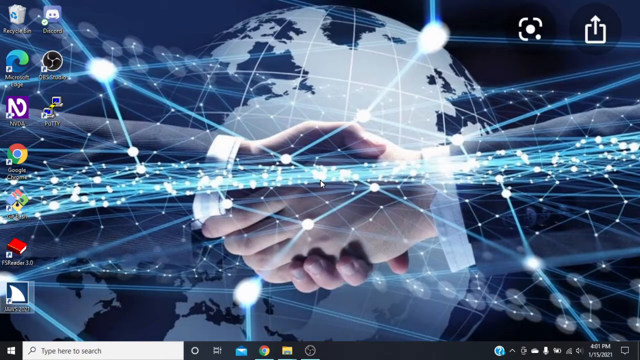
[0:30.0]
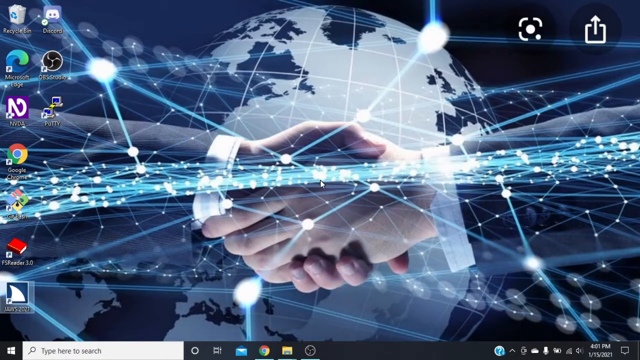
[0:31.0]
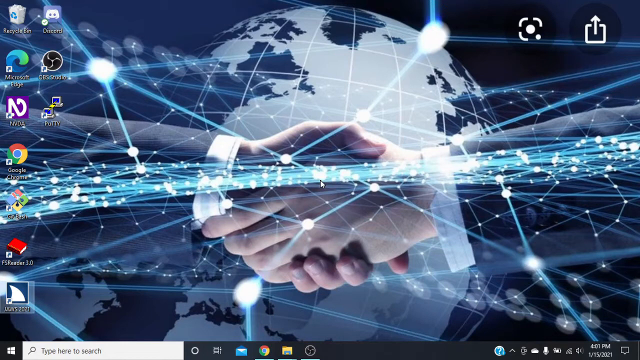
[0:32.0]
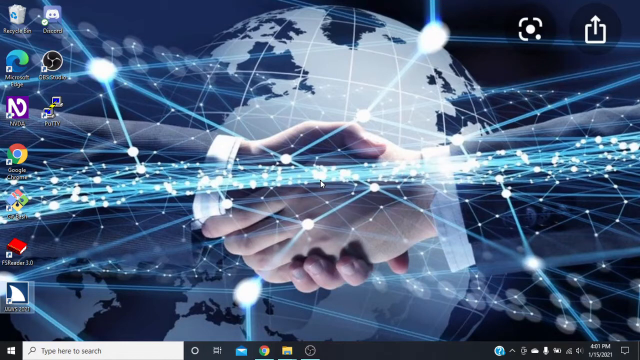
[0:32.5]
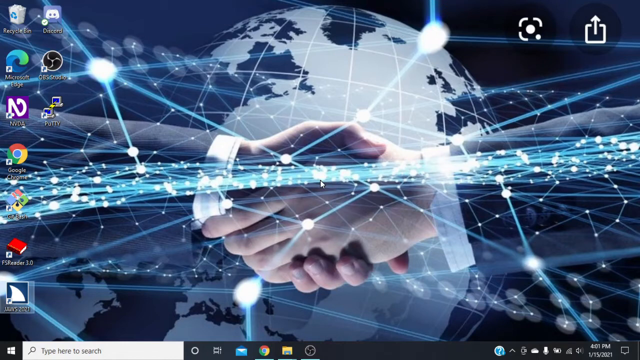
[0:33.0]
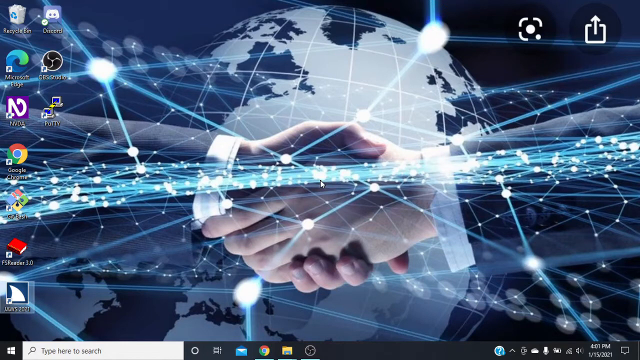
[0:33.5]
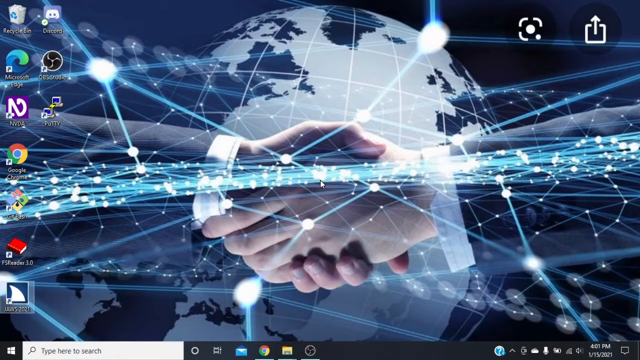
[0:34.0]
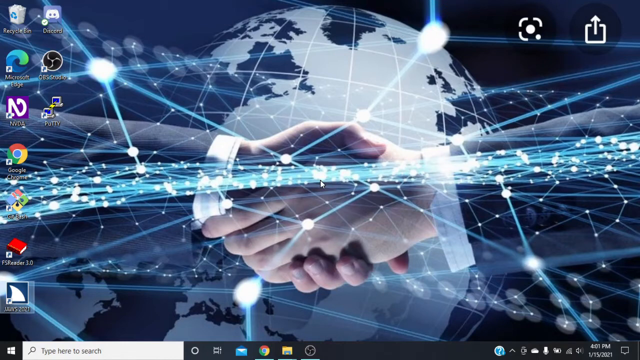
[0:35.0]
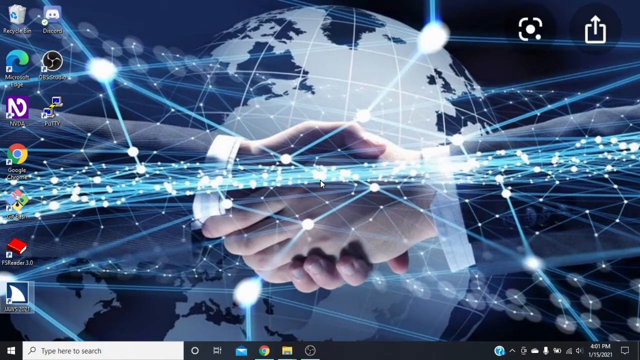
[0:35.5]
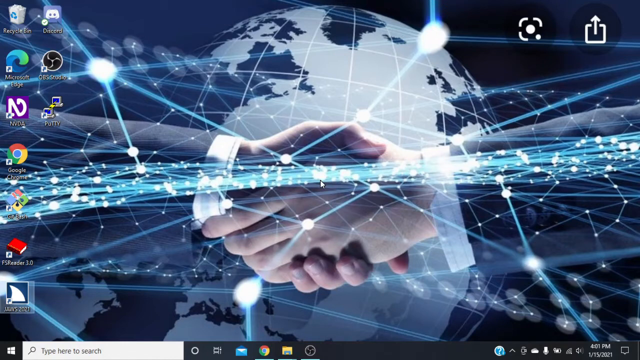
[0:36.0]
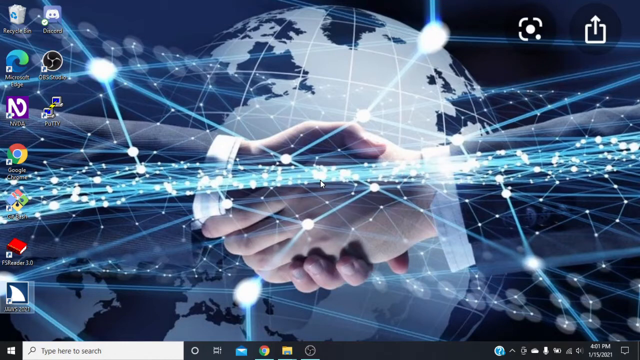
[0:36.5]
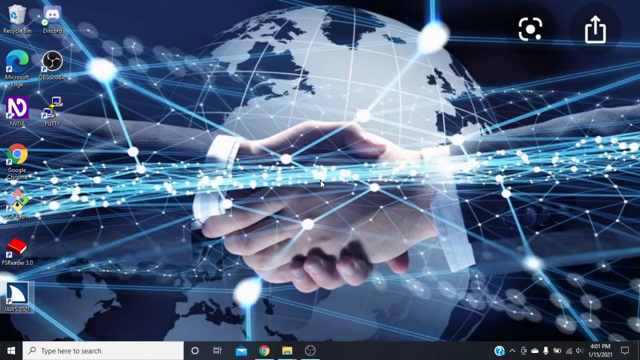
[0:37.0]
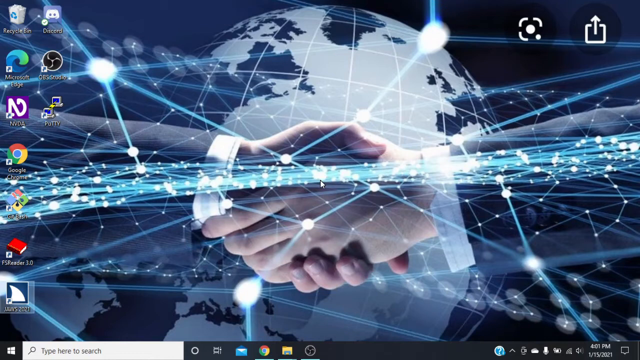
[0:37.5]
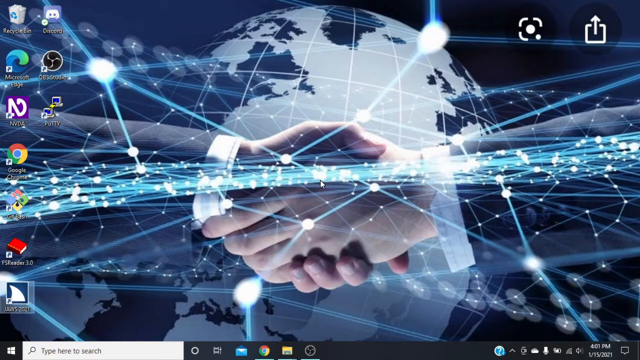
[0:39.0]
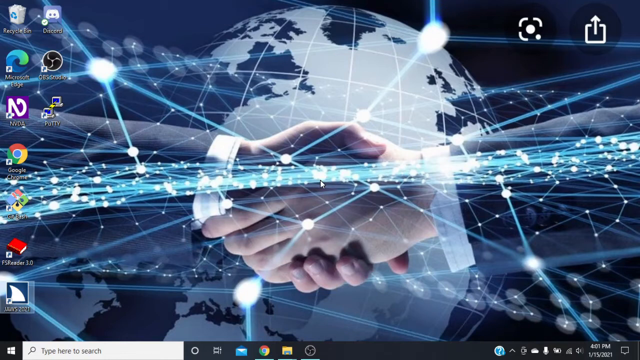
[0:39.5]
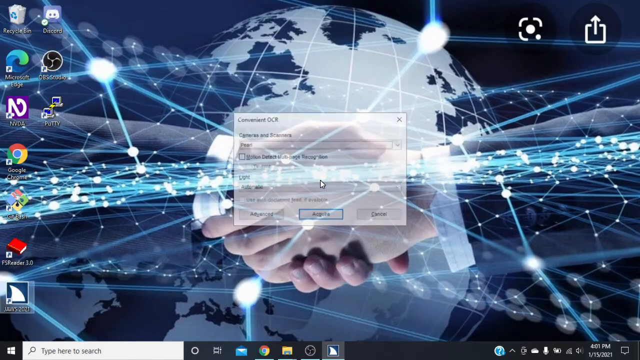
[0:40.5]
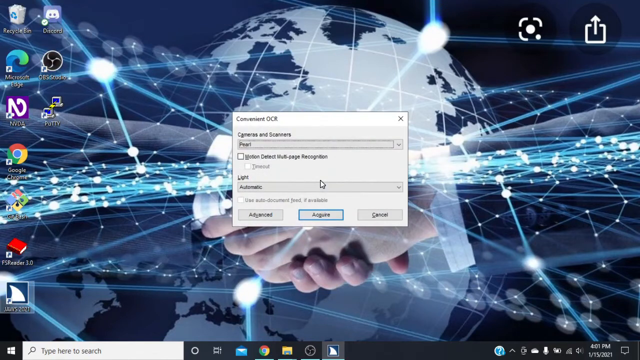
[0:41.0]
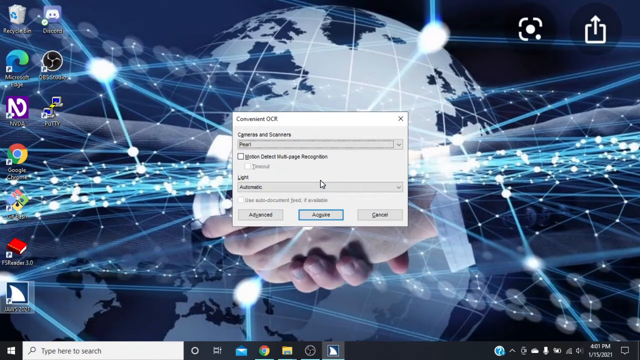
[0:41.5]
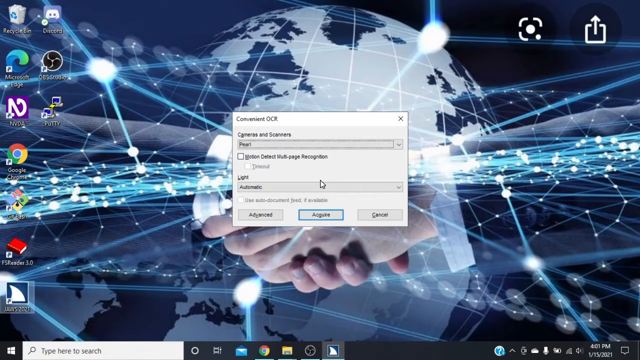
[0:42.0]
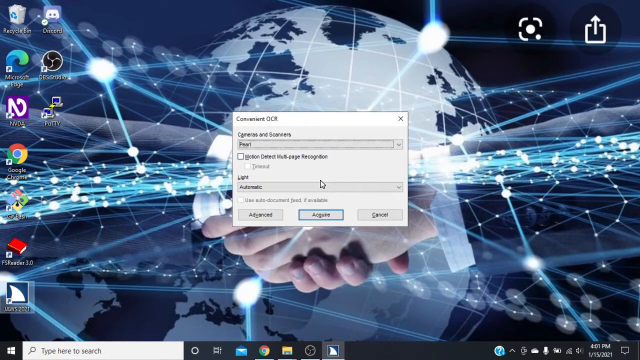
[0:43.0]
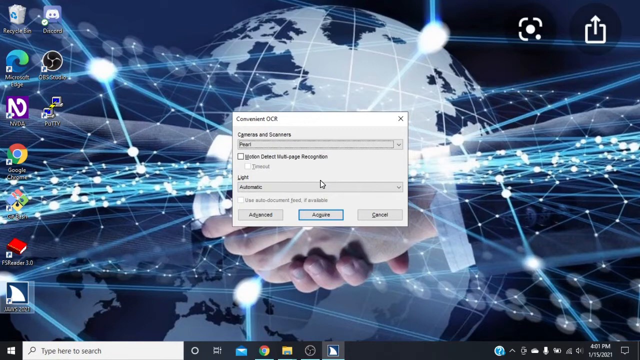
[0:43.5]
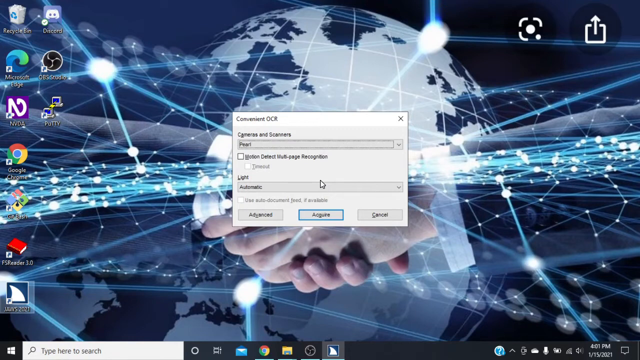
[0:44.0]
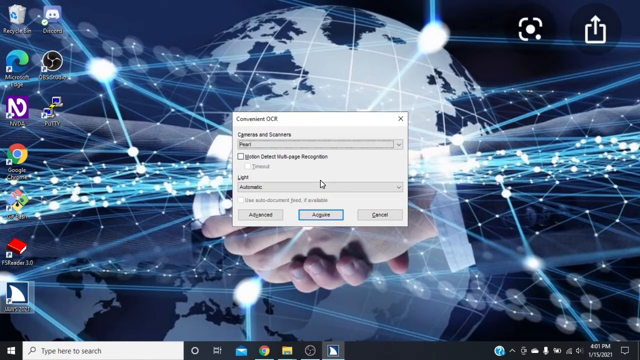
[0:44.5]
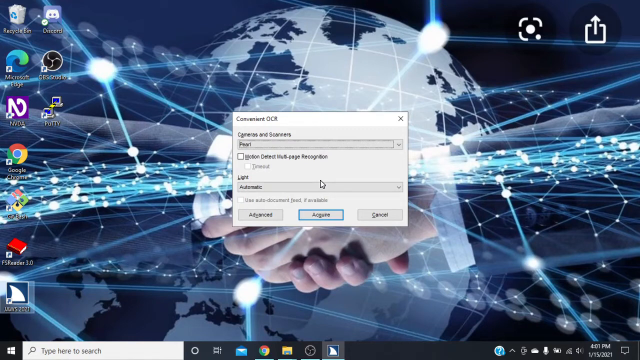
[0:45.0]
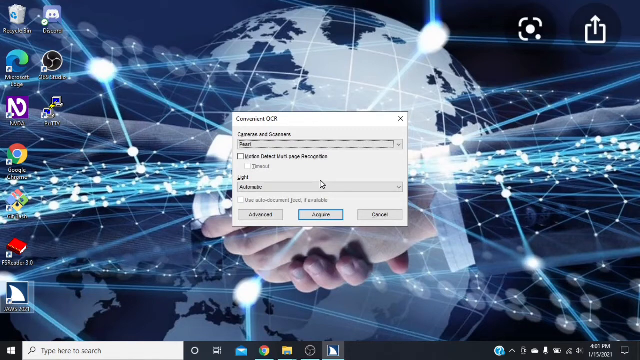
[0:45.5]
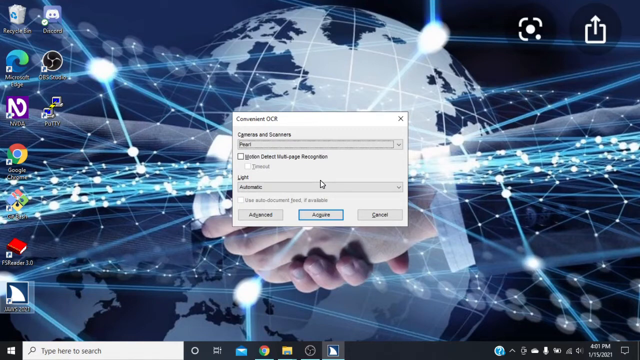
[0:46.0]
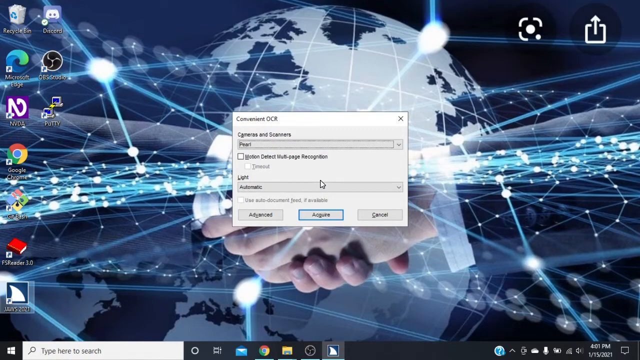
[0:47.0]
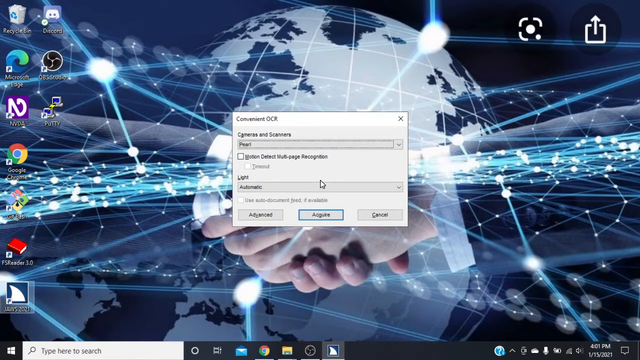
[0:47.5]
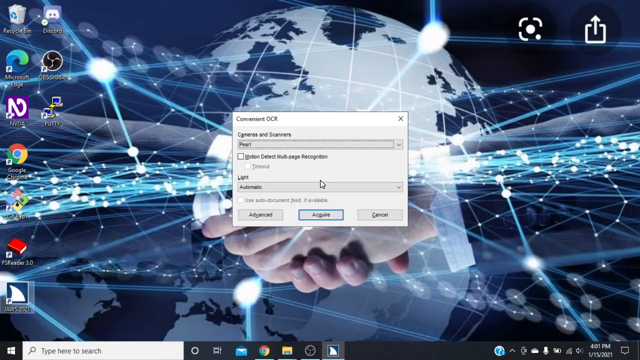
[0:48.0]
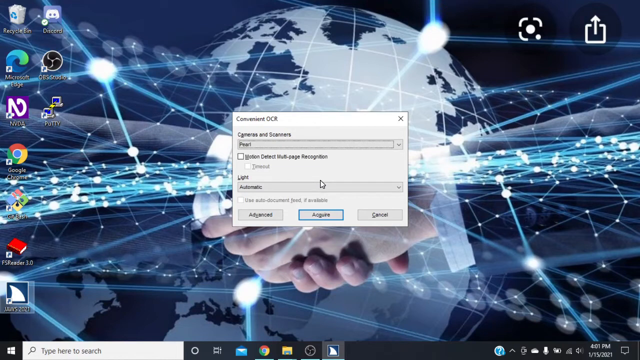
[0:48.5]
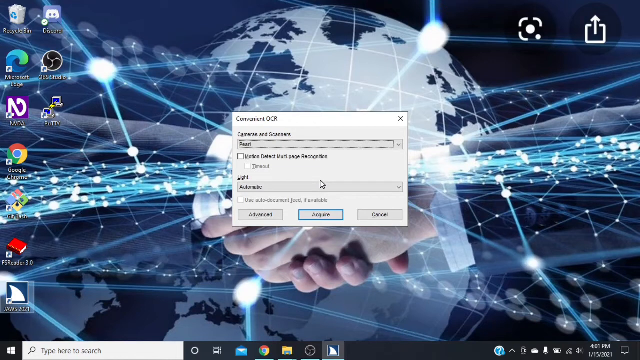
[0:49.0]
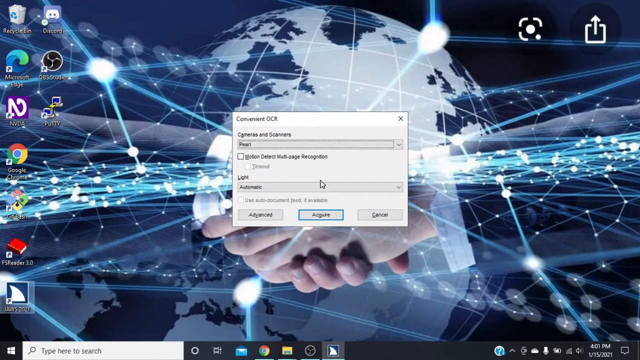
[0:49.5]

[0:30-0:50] The background continues to be shown with no one interacting with it. Lines connect to dots around the picture of the globe, along with ships and planes, which seem to represent connection around the world, or the internet and connecting with each other through technology. A window labeled "convenient OCR" then opens in the center of the screen. It has two drop-down menus labeled "cameras and scanners" and "light." The settings at the top of the pop-up are in Spanish. The middle button at the bottom is highlighted with a blue rectangle. The mouse cursor is in the middle of the light drop-down box, which says "automatic." The selected camera or scanner is called "Pearl." There are three radio buttons on the screen.